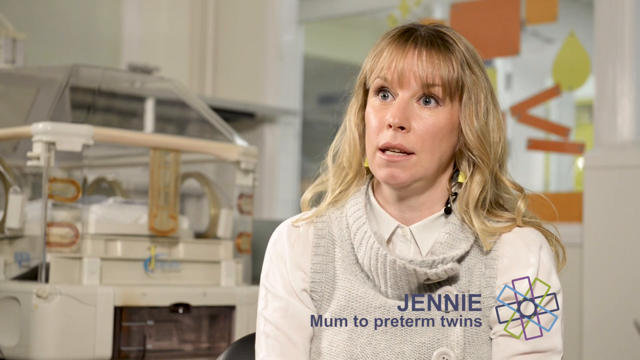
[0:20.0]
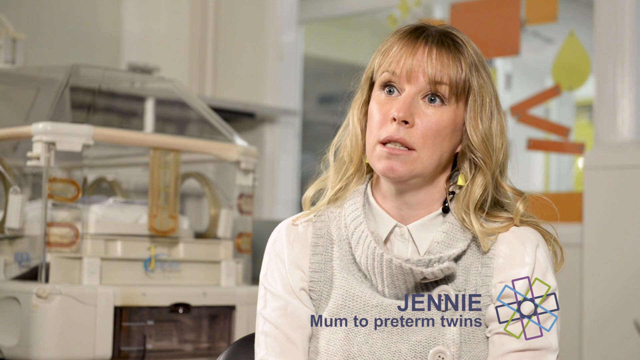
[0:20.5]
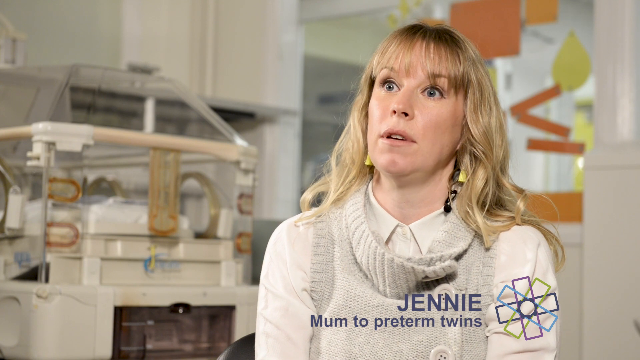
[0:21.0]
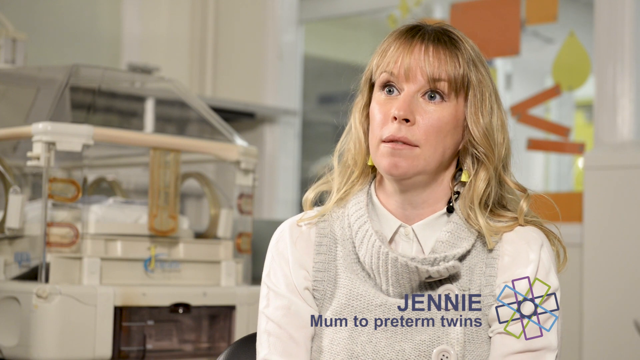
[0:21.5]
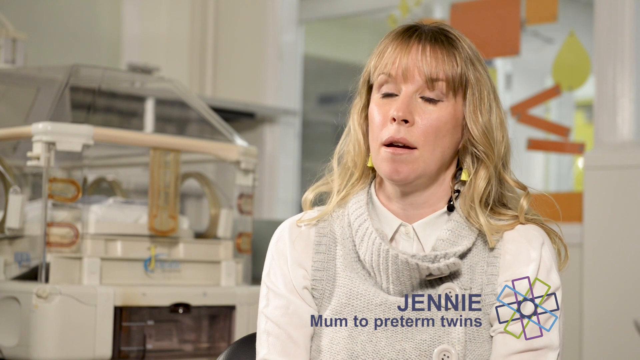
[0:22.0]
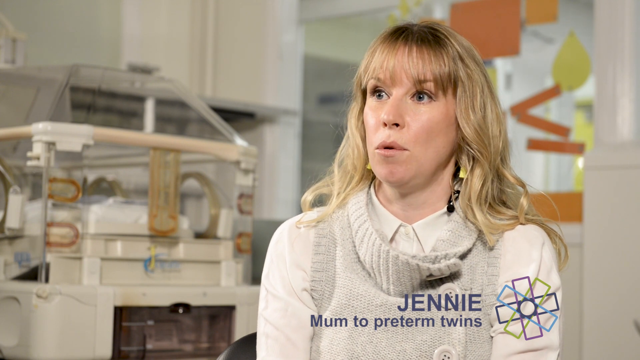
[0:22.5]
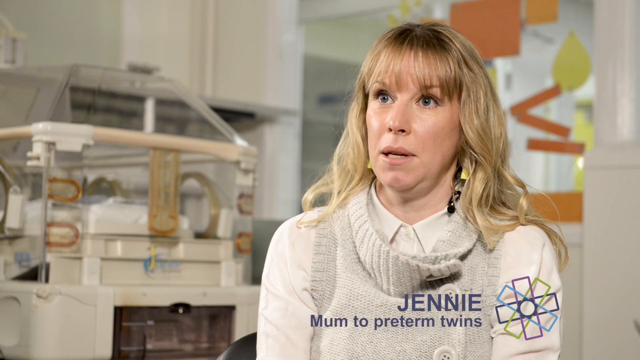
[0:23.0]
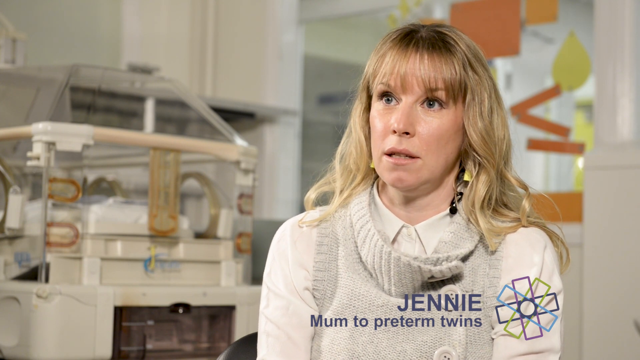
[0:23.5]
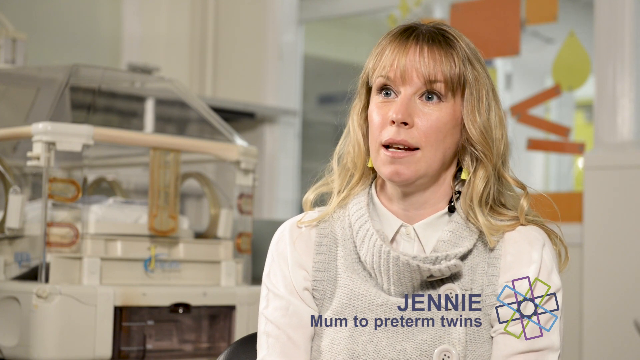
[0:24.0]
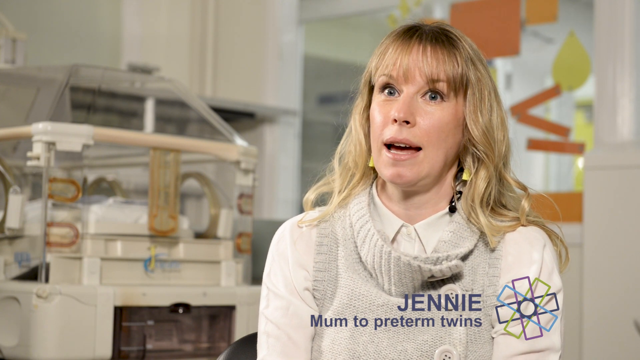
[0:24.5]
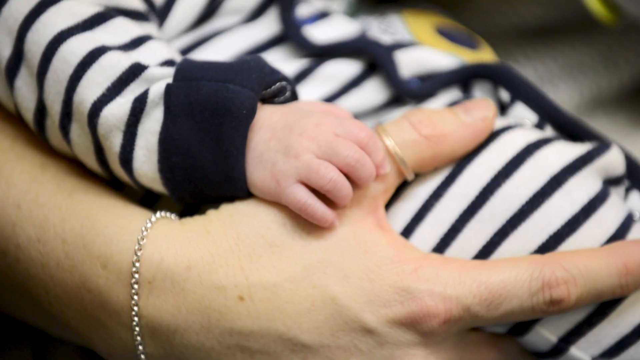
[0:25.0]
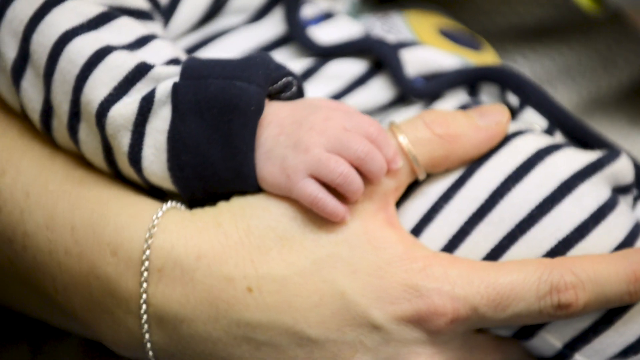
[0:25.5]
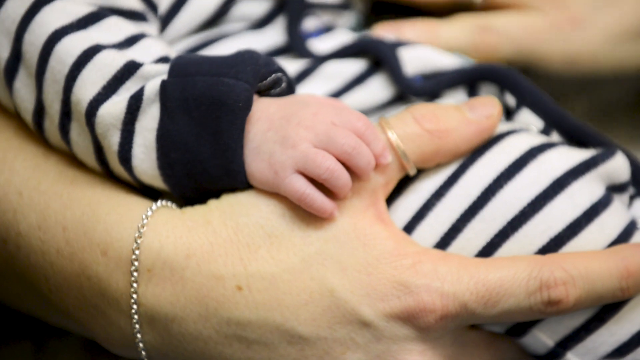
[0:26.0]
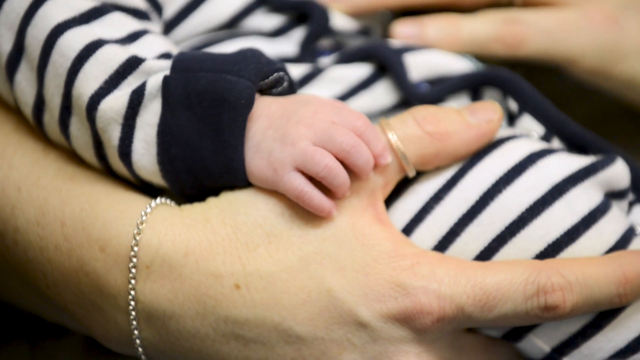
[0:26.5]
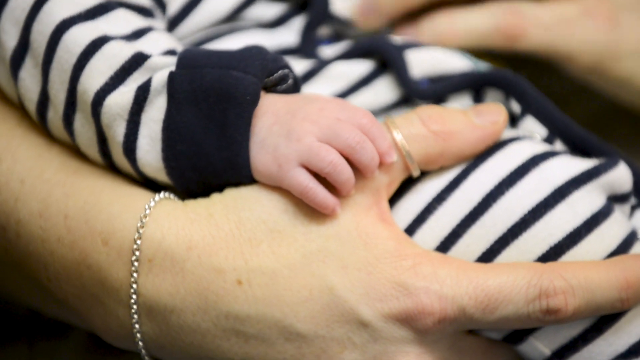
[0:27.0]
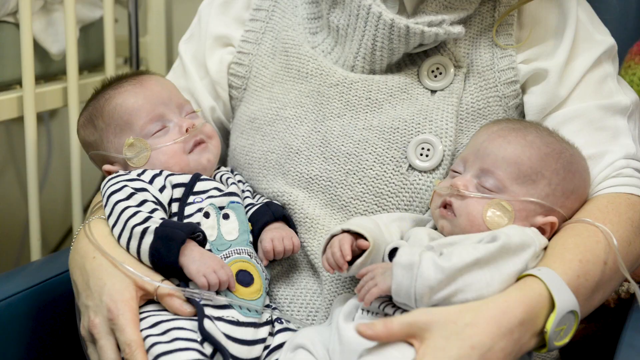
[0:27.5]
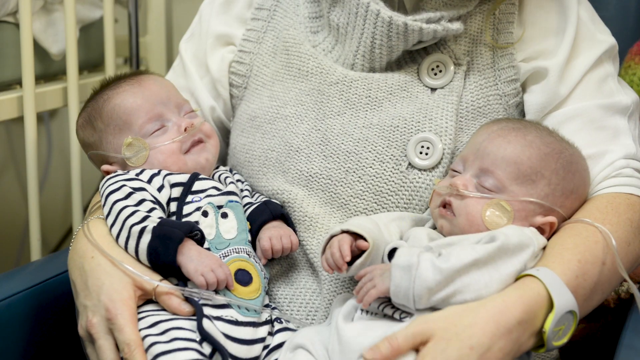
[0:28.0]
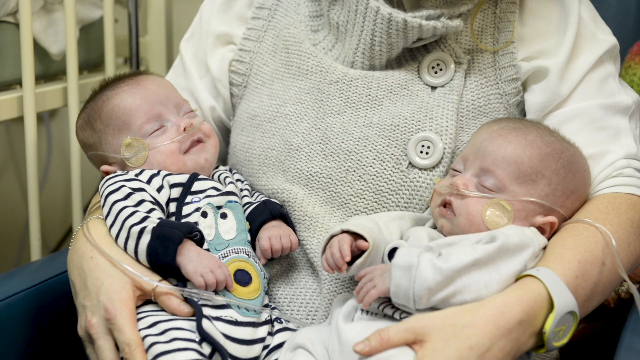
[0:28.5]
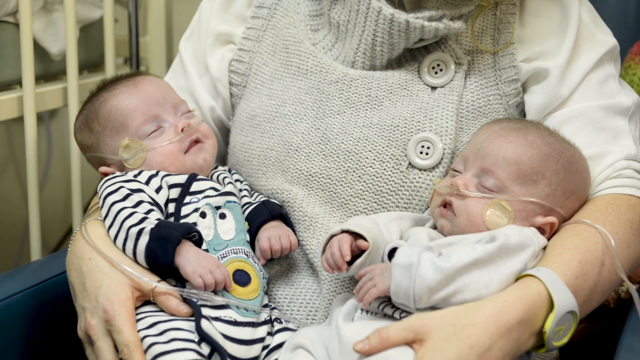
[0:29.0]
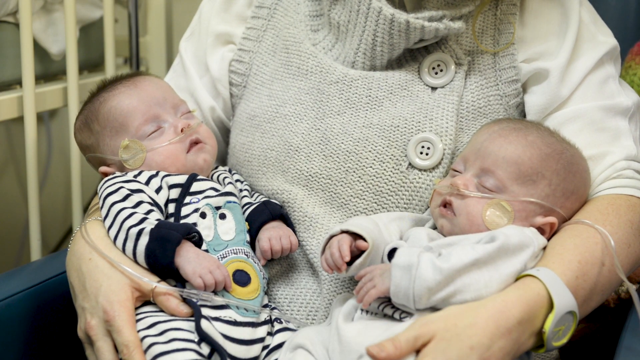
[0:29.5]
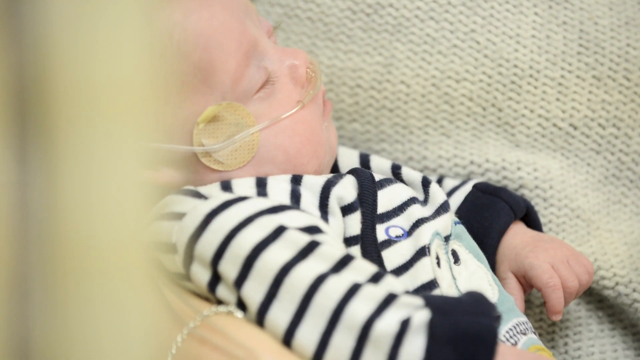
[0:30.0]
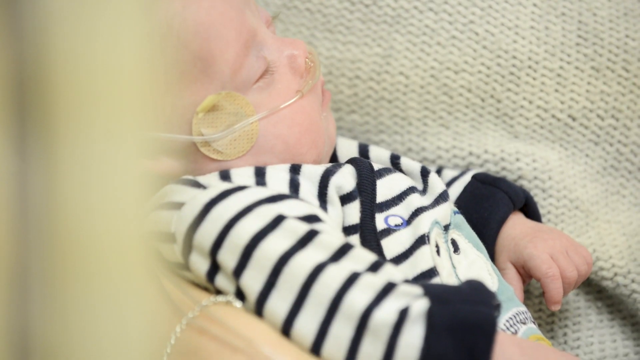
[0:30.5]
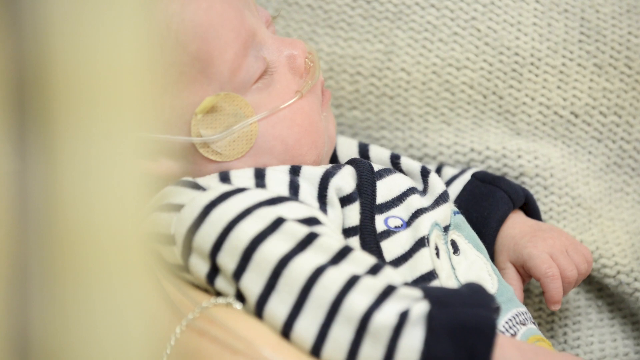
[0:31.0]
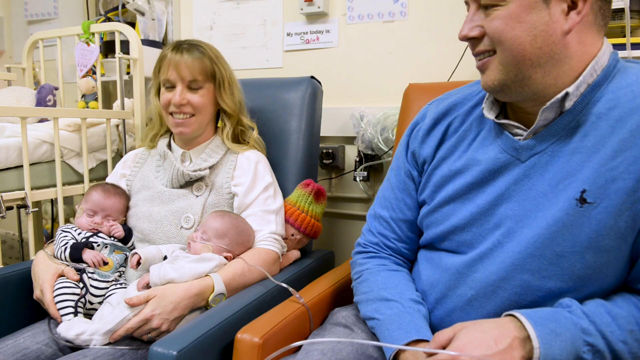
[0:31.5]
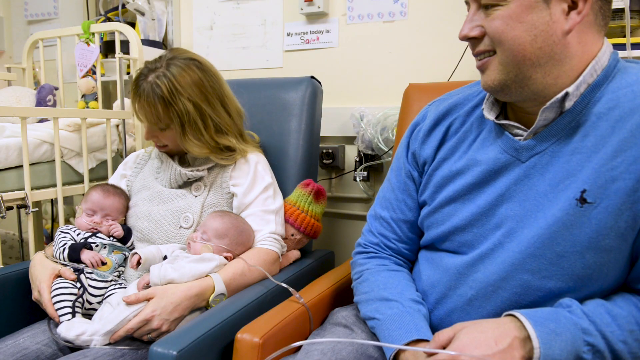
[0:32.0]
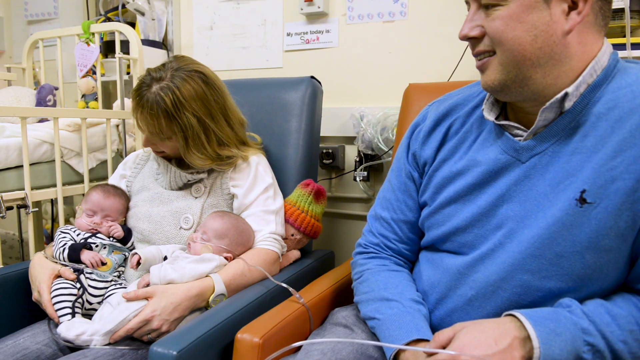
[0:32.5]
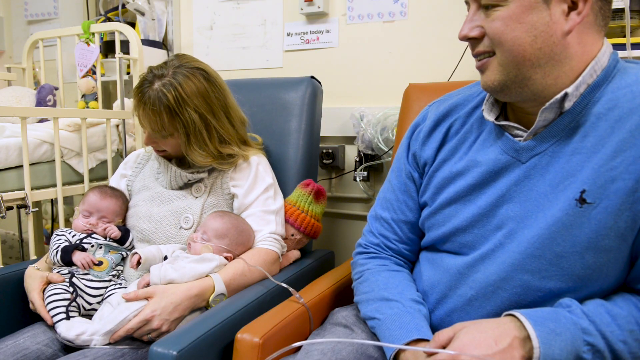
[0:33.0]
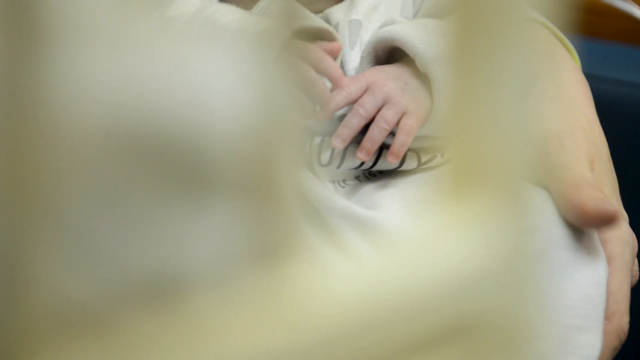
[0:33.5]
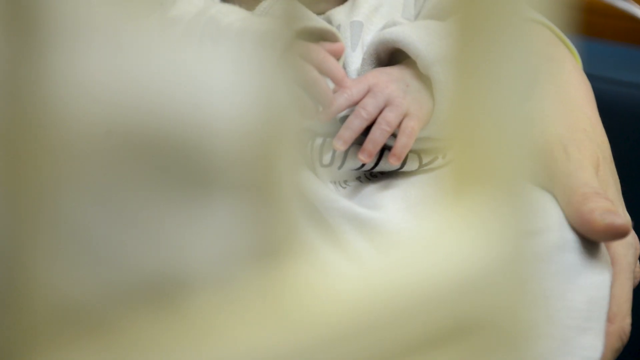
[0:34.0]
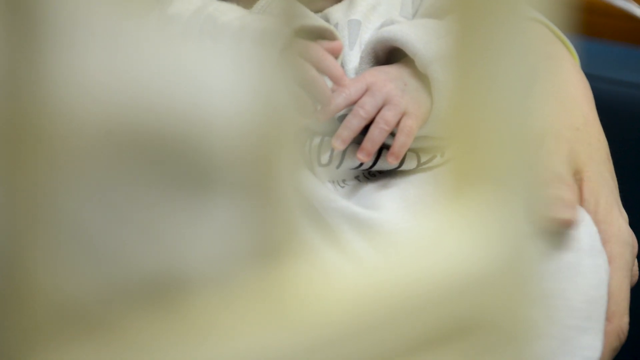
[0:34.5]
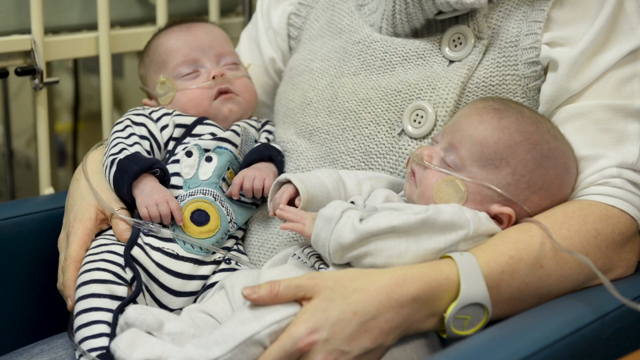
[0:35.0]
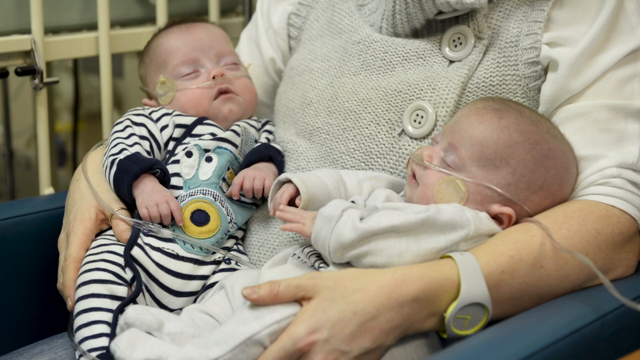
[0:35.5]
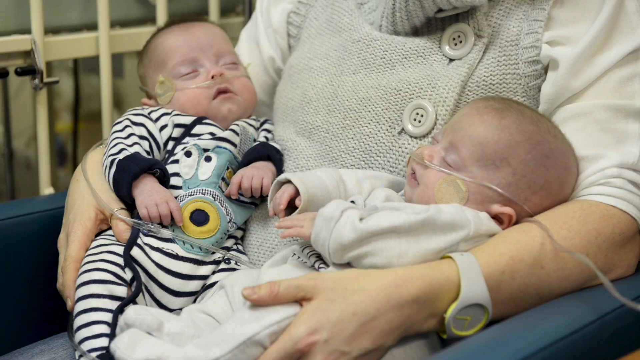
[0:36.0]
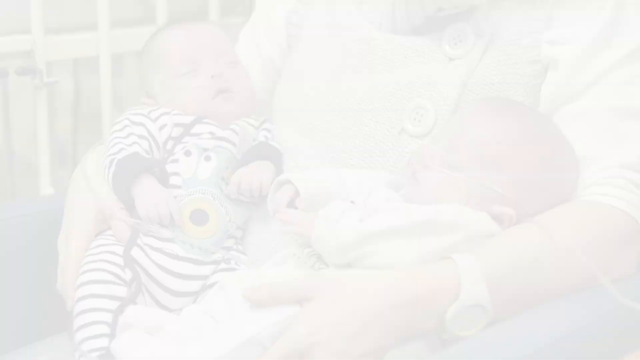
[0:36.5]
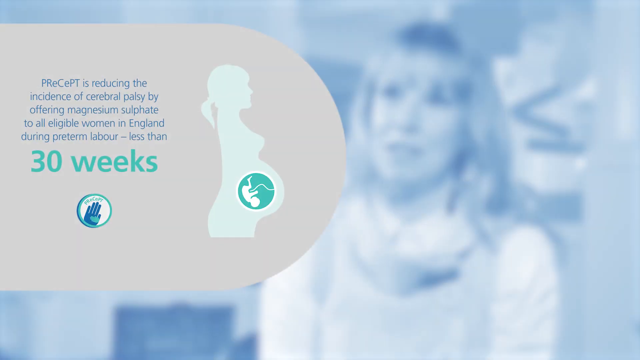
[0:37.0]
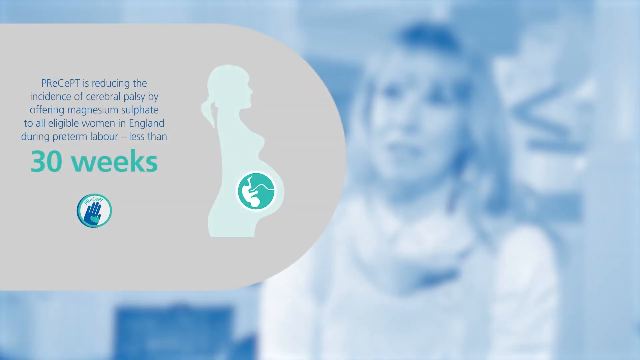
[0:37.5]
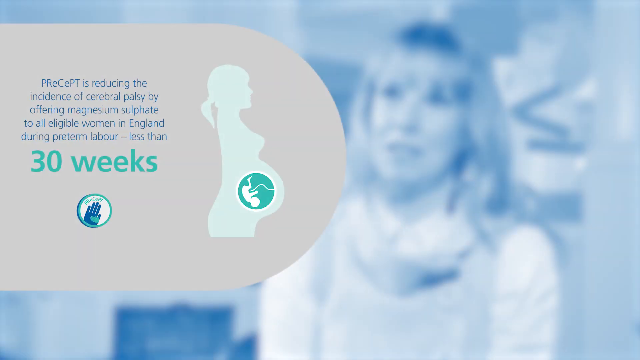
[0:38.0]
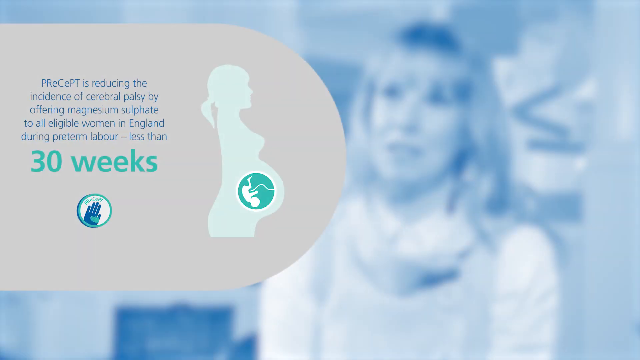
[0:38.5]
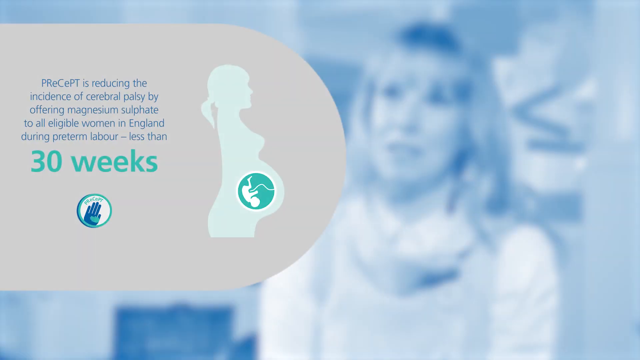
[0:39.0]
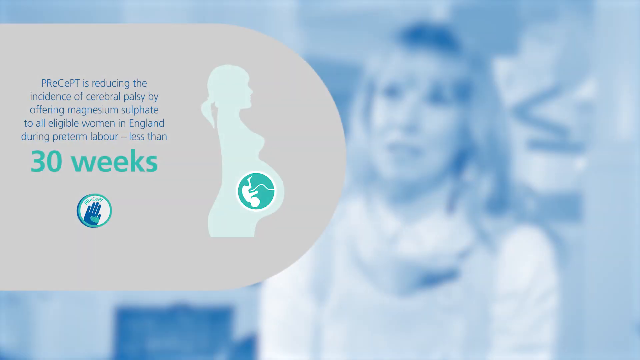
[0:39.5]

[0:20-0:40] A woman called Jenny is introduced: in the bottom right corner, blue capital letters read "Jenny" with "mum to preterm twins" underneath, and there is no logo to the right-hand side. Jenny sits in an ICU, with a prenatal cot behind her and a wall in the back with orange posters and stickers on it. She is probably in her 30s or 40s, with blonde shoulder-length hair with dark brown roots and big eyes, and she wears a shirt with a pullover over it and large earrings. A shot follows of her baby's hand holding her hand, then the two twins in her lap. Both babies have things in their noses to keep their oxygen levels correct. The dad is in the other chair, wearing a blue jumper, while the twins sleep in their mum's lap.